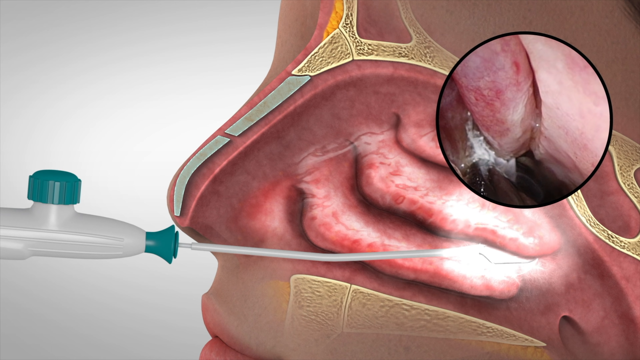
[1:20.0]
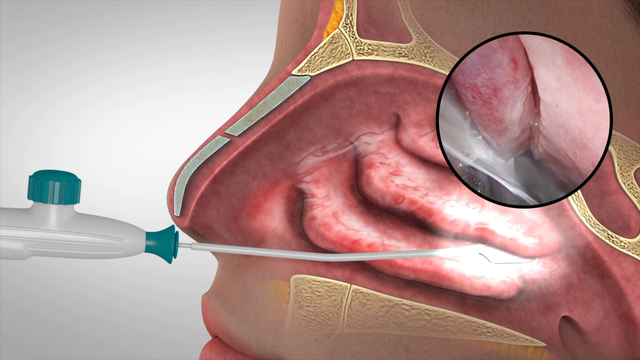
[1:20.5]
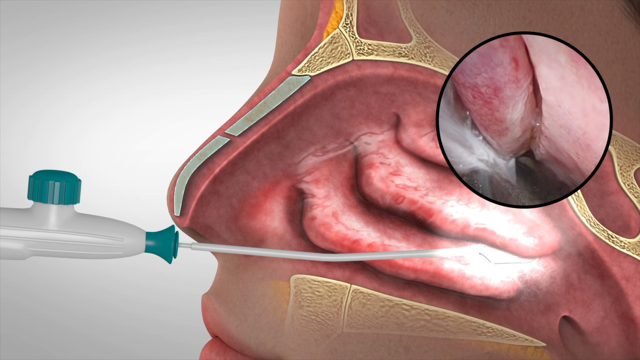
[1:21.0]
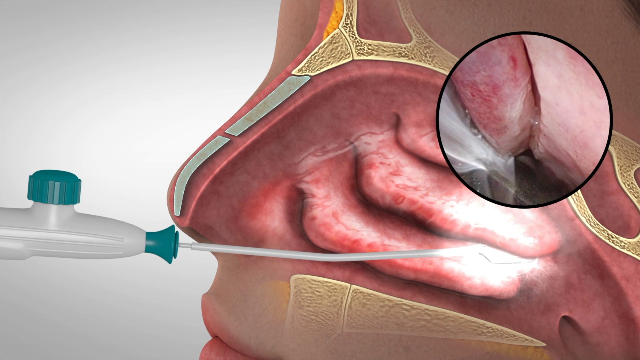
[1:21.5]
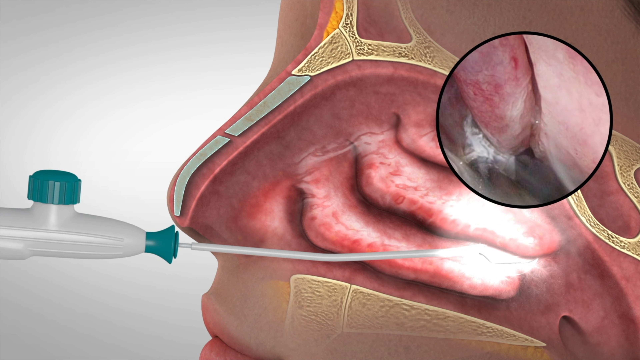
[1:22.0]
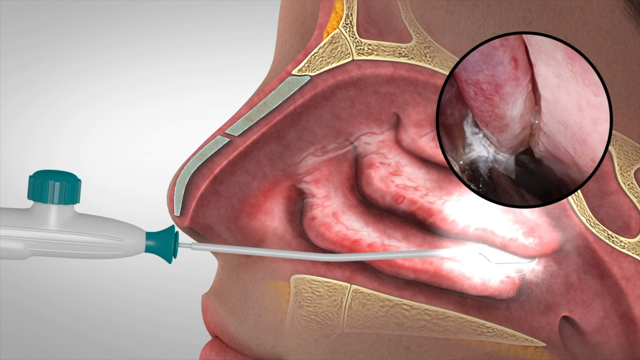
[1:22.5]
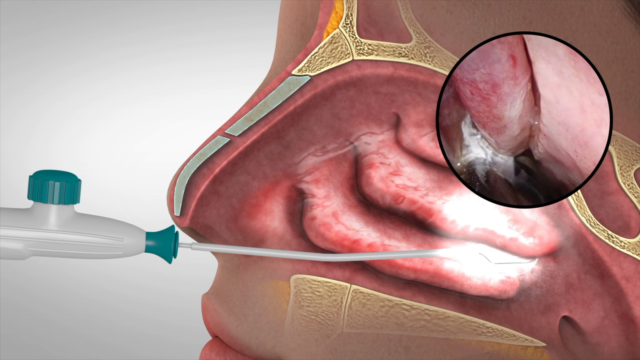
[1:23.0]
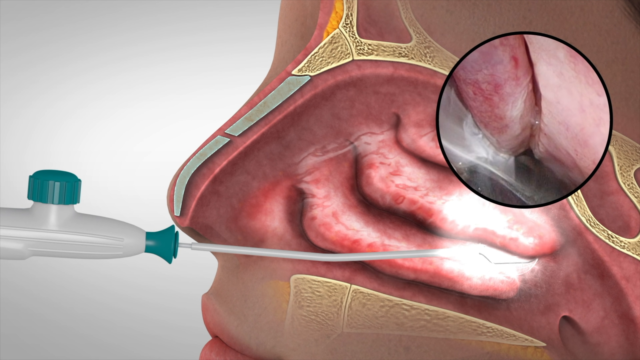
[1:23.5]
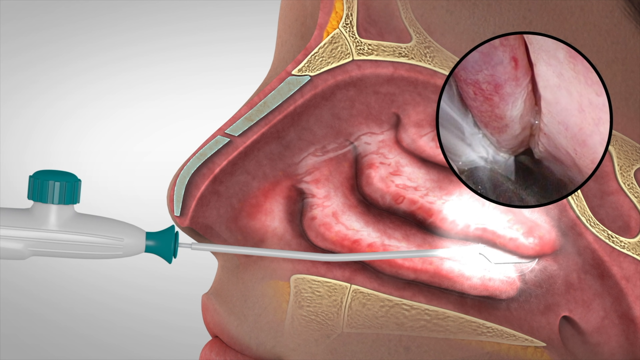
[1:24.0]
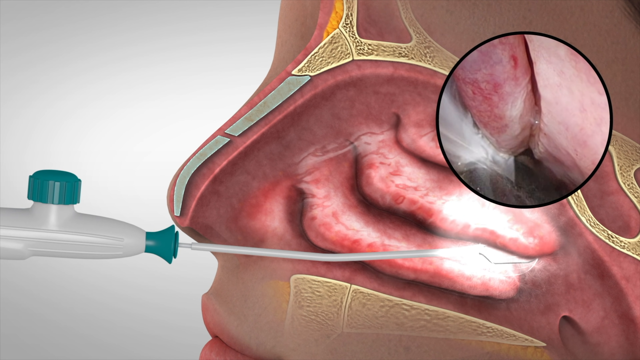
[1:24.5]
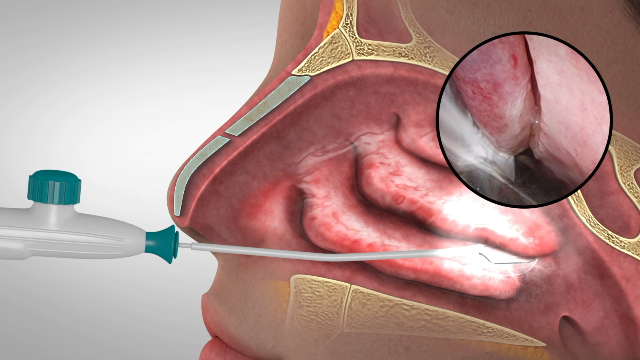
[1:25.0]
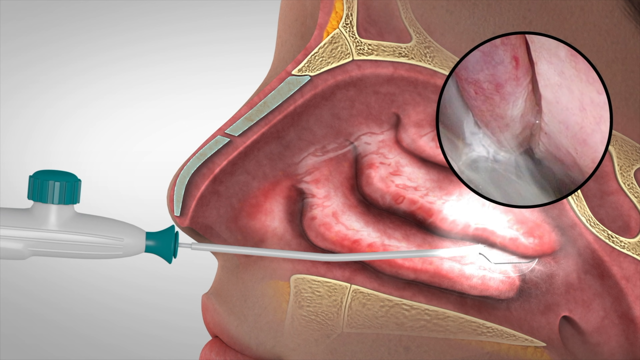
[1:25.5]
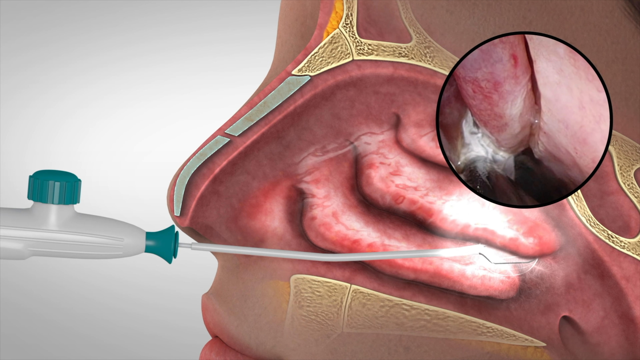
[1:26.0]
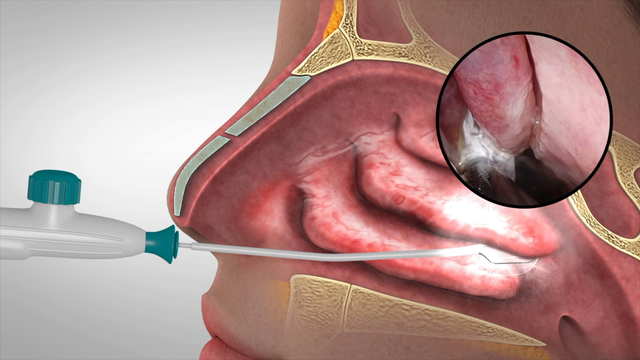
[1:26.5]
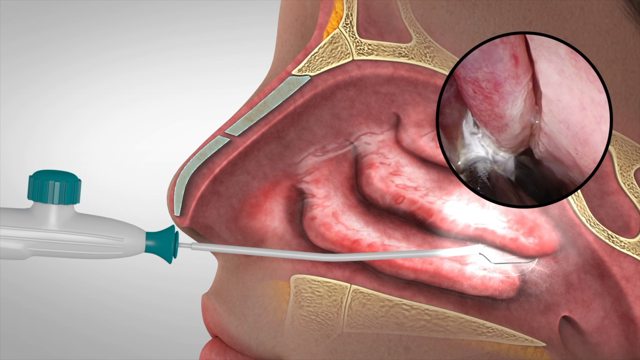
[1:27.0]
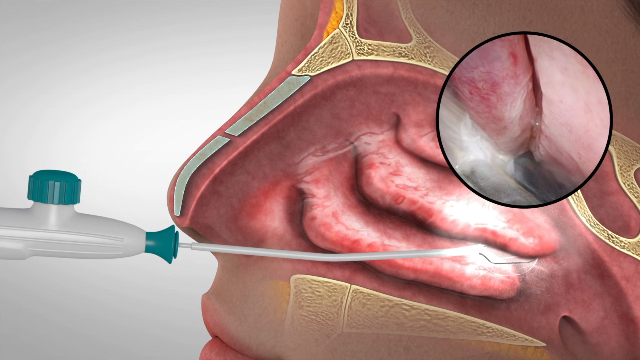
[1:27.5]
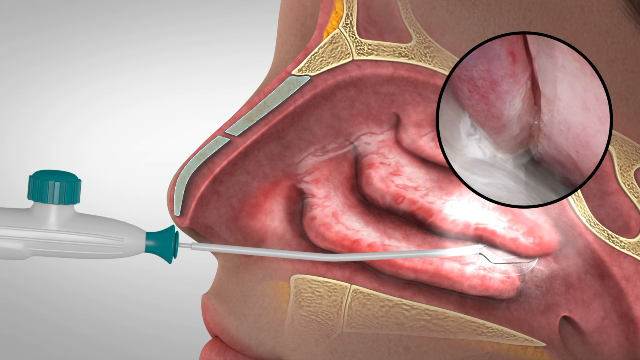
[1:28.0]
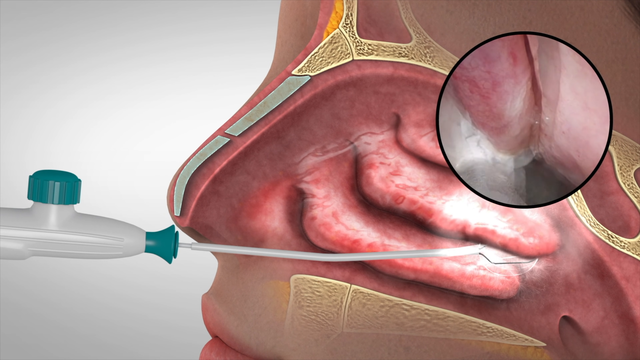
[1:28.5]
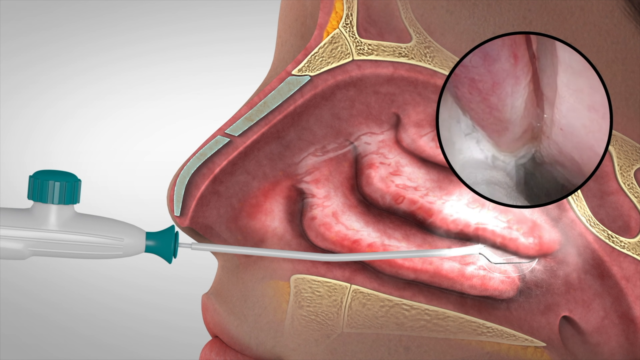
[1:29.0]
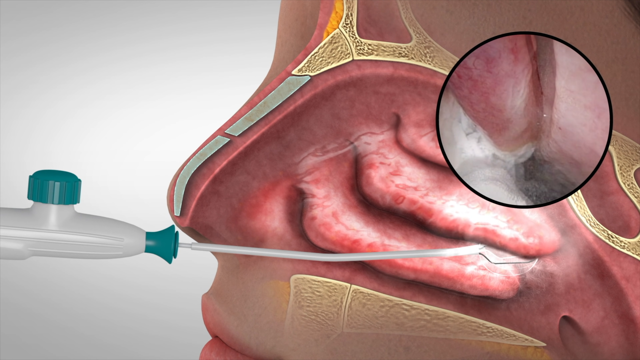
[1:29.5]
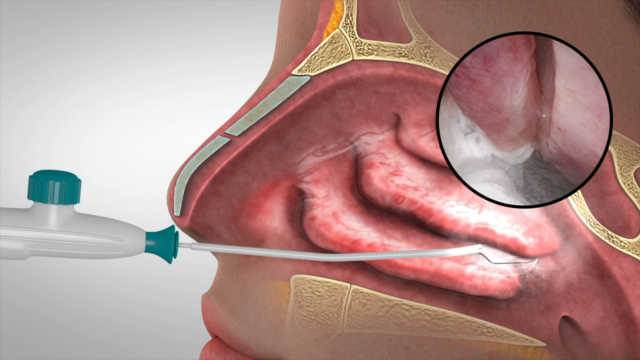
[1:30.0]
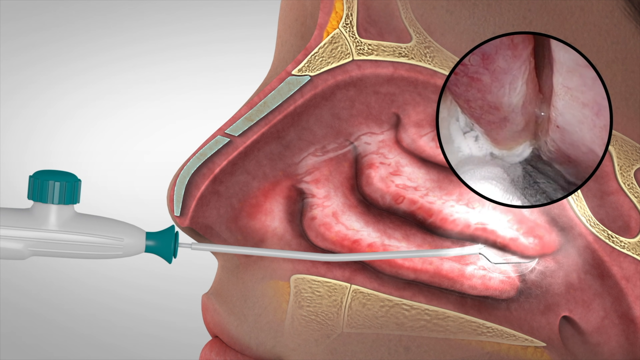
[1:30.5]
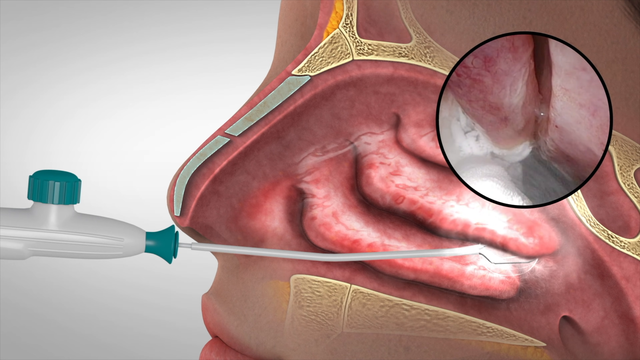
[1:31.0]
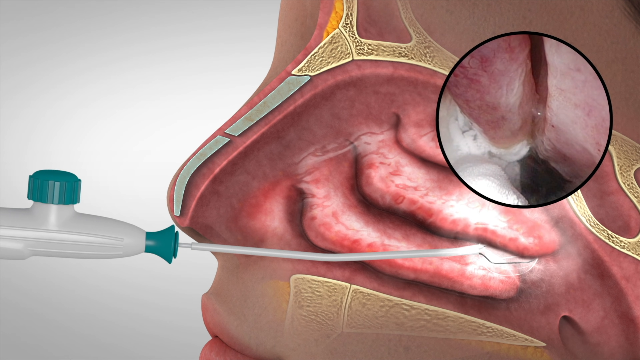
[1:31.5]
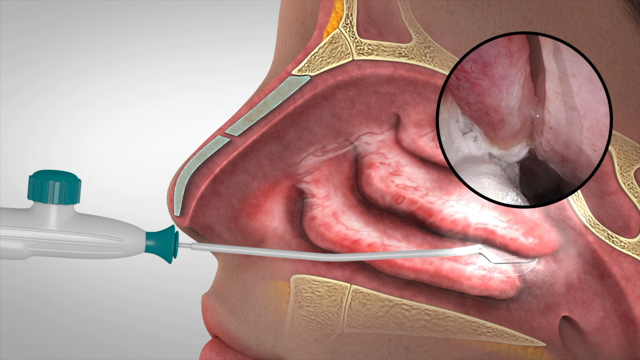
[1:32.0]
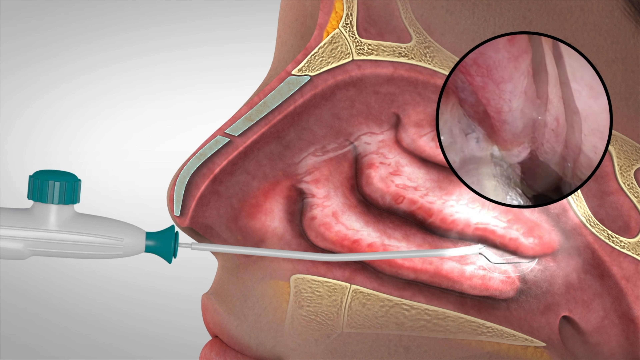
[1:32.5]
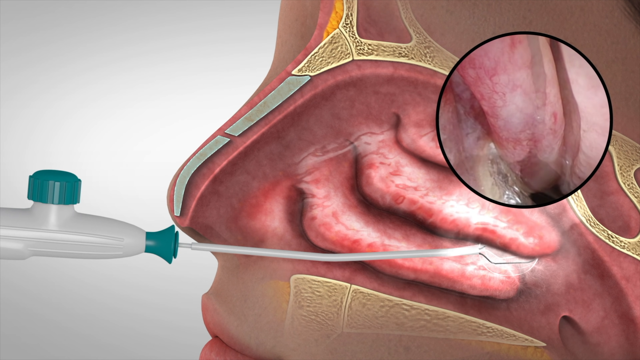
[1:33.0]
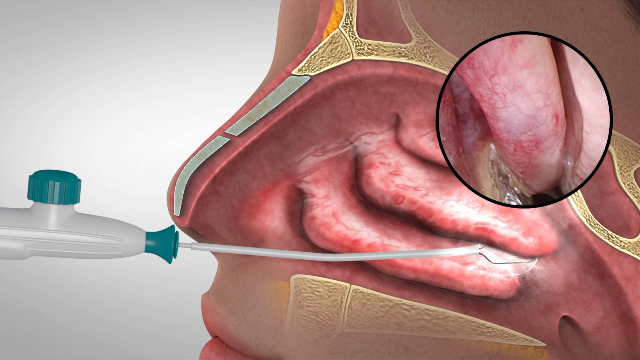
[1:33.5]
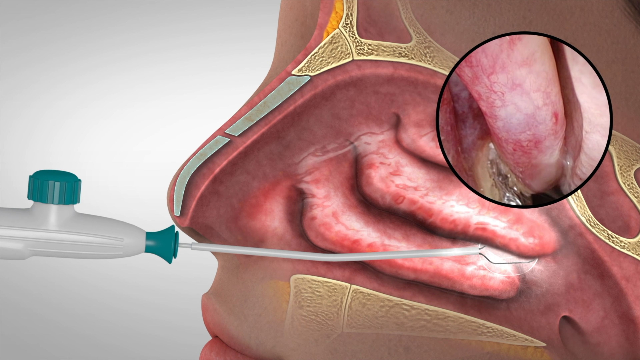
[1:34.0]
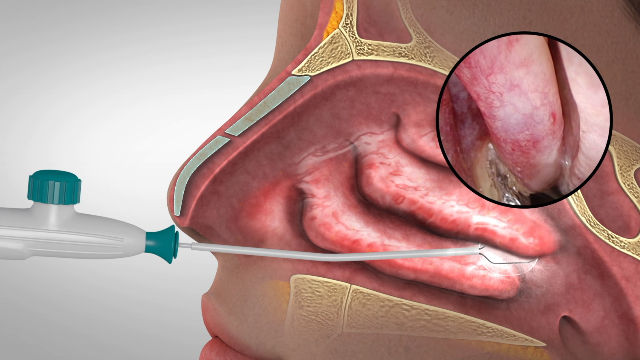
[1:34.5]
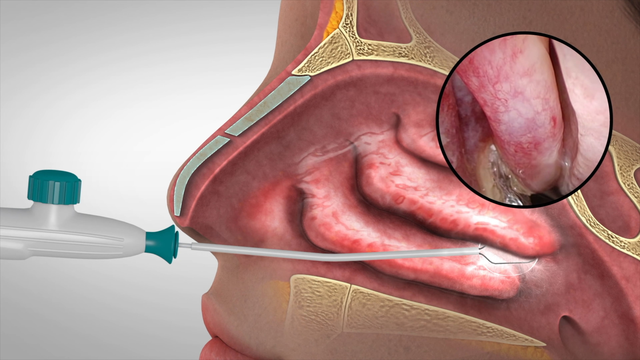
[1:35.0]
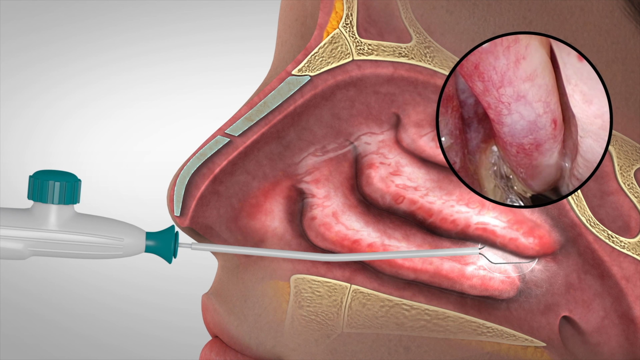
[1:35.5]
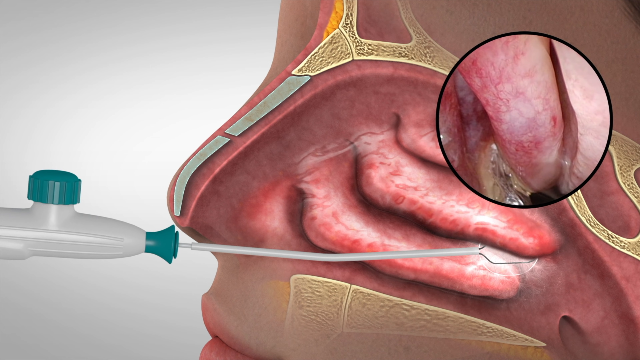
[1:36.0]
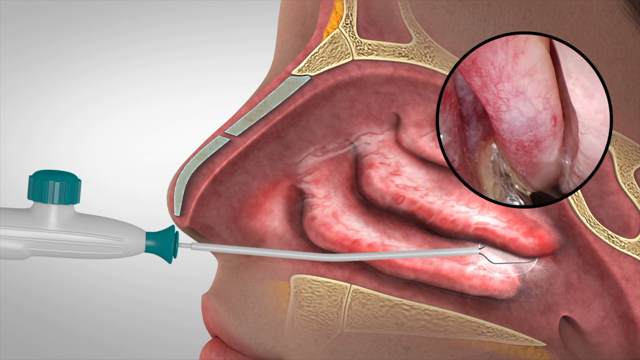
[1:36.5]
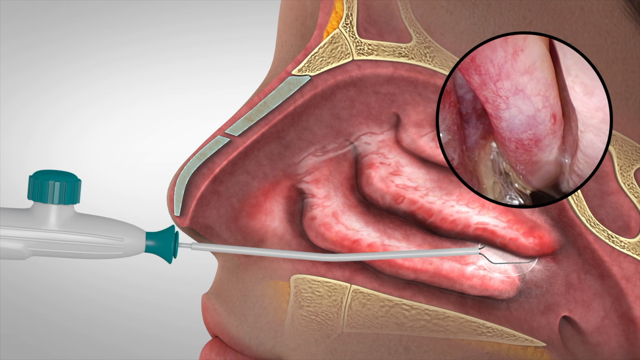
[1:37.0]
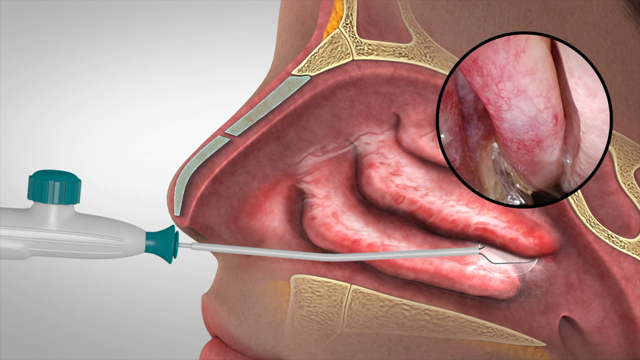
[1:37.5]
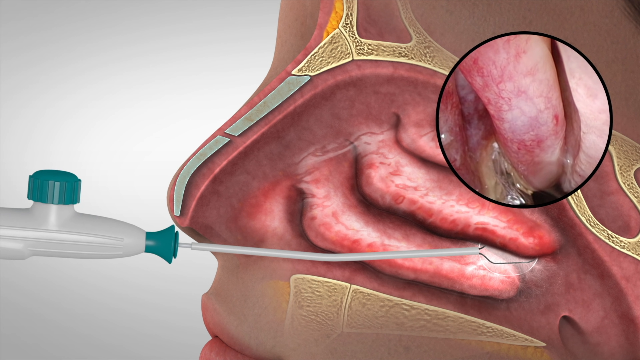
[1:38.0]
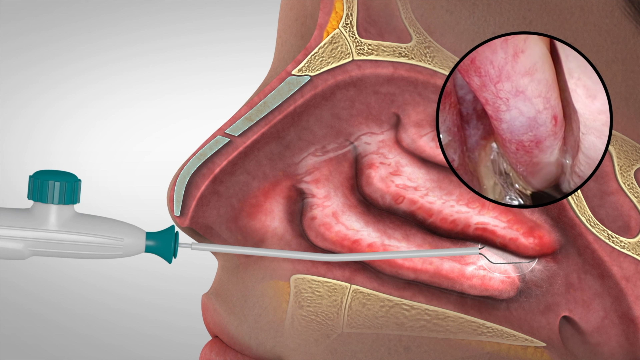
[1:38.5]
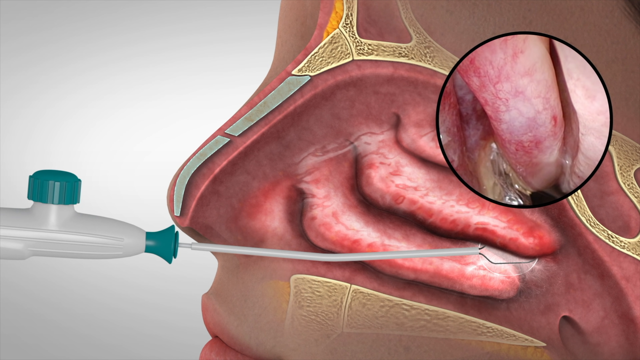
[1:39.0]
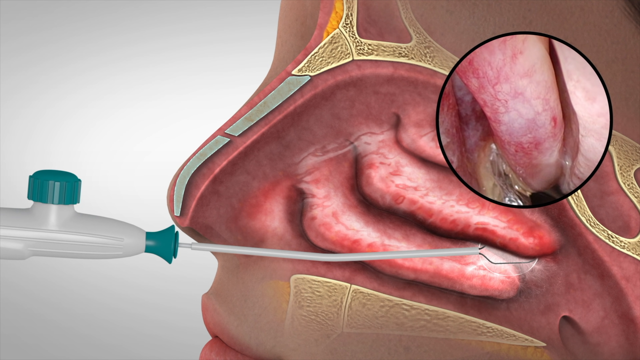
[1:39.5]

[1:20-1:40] Water continues to be flushed through the nasal cavity. It looks like quite a lot of water pressure for the small opening, and it moves quite quickly. After a cut, the water or solution has stopped, and some mucus appears to be left in the nose. Apart from the real scope camera footage from inside a real person's nose, everything is an animated graphic, including the Clarifix device; the animated end of the device and the animated tip containing the camera are visible.